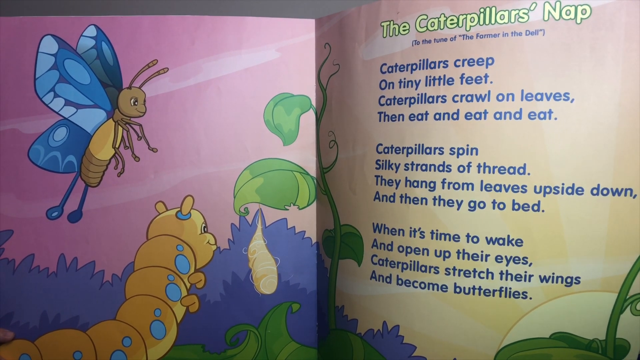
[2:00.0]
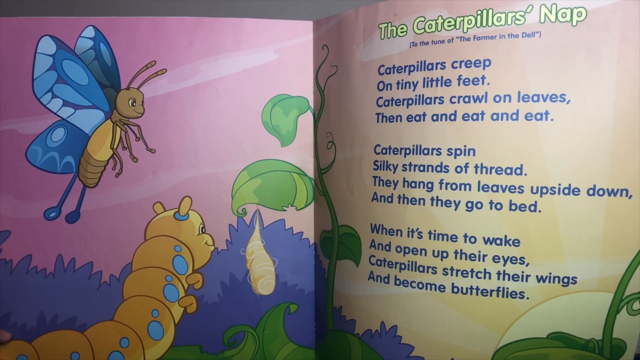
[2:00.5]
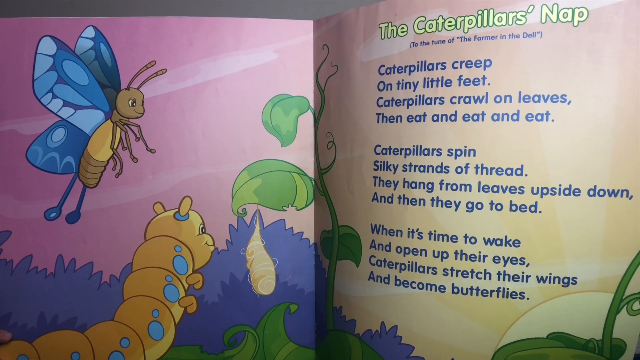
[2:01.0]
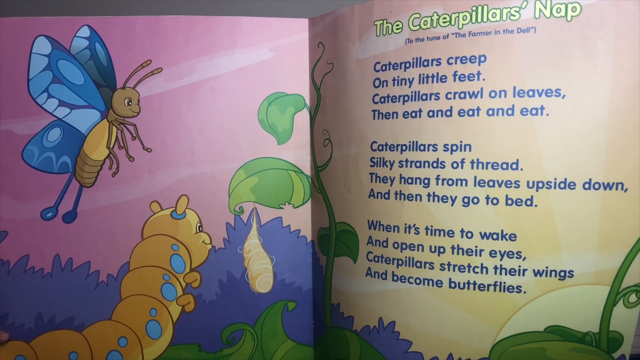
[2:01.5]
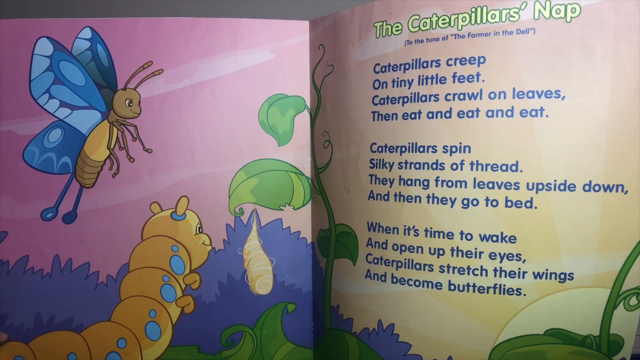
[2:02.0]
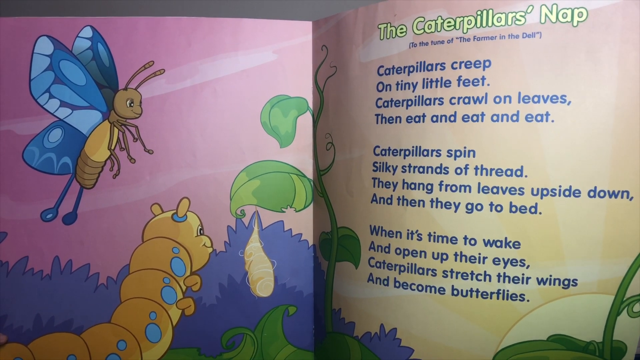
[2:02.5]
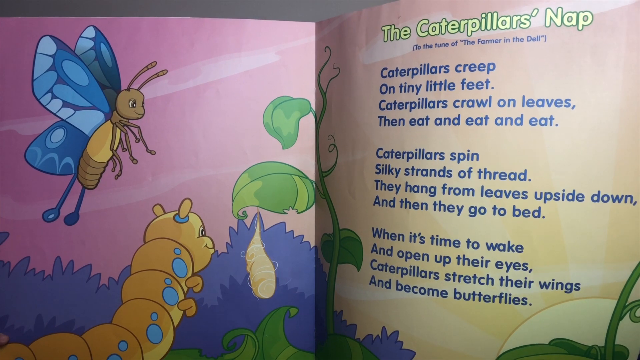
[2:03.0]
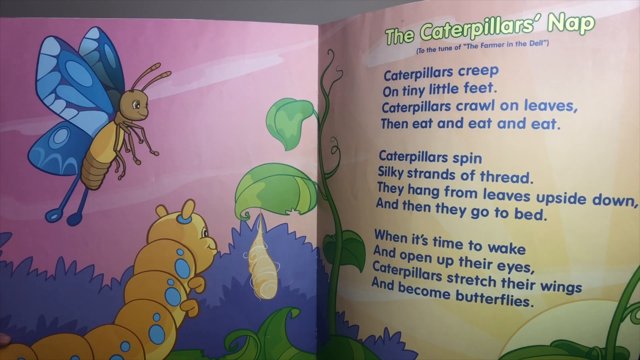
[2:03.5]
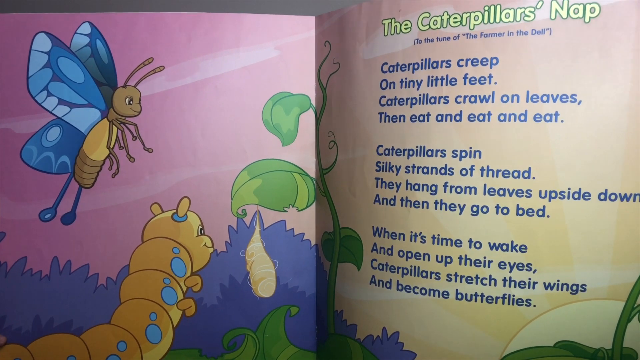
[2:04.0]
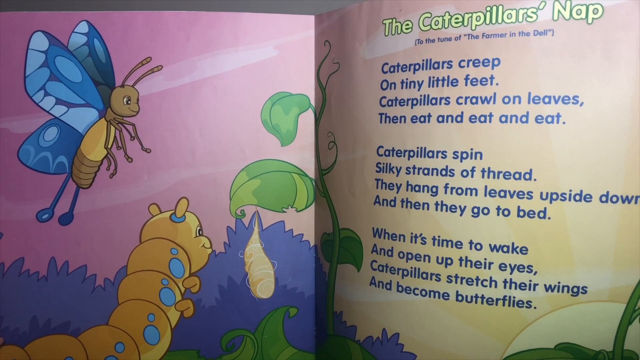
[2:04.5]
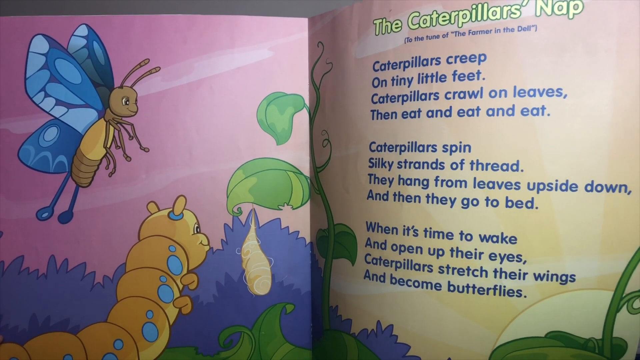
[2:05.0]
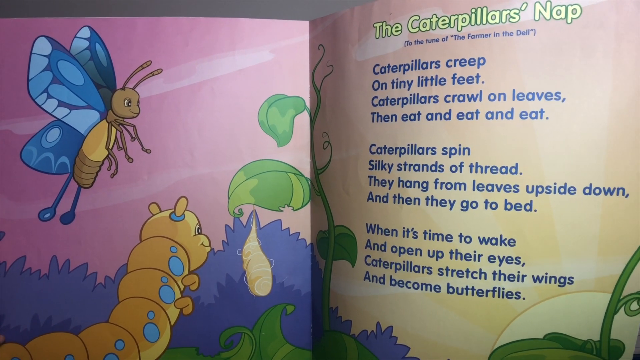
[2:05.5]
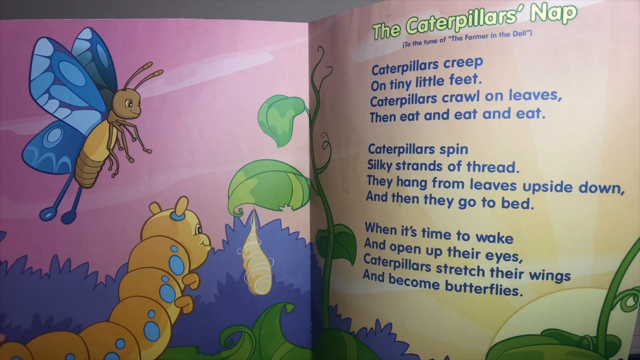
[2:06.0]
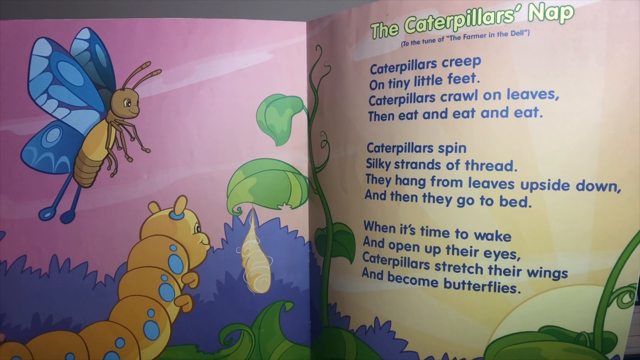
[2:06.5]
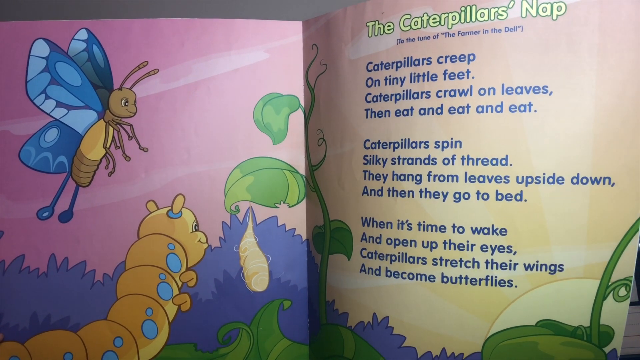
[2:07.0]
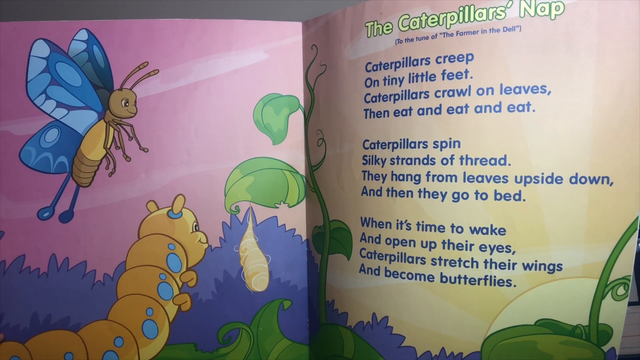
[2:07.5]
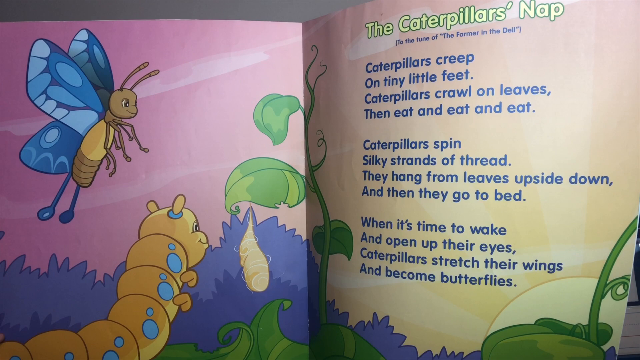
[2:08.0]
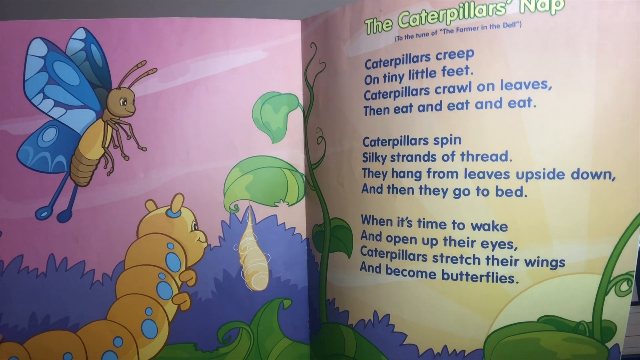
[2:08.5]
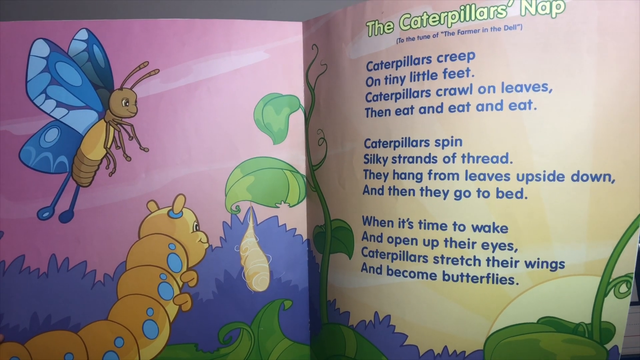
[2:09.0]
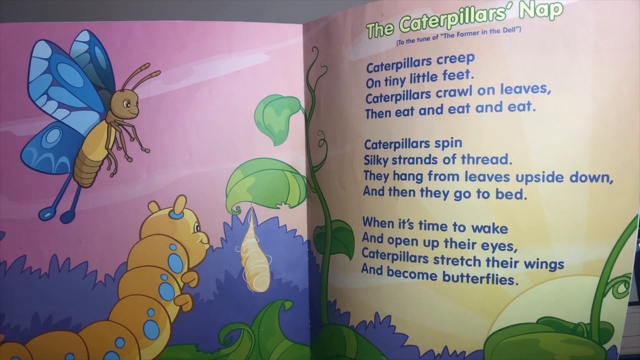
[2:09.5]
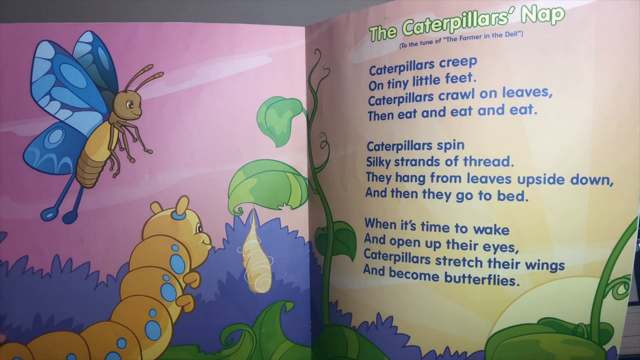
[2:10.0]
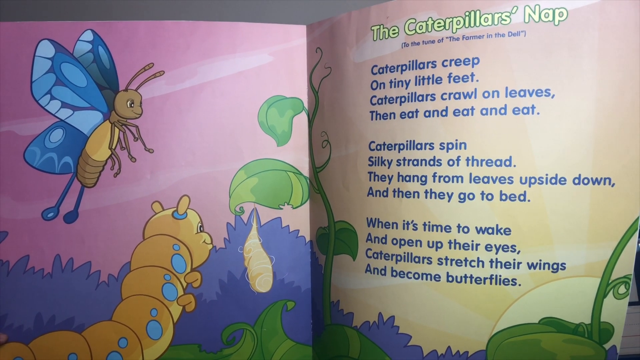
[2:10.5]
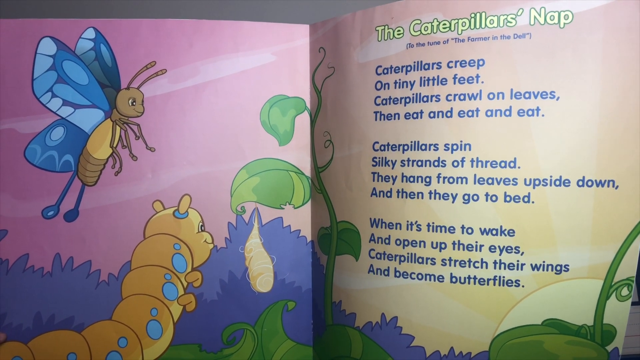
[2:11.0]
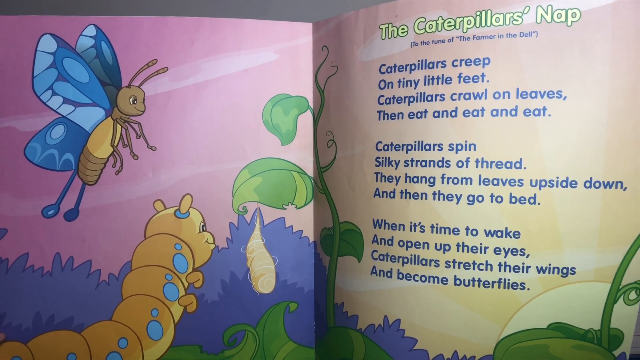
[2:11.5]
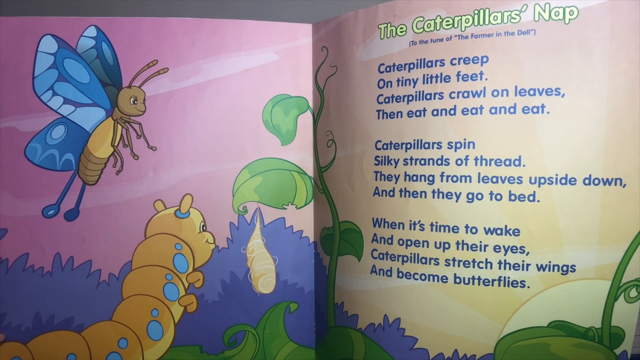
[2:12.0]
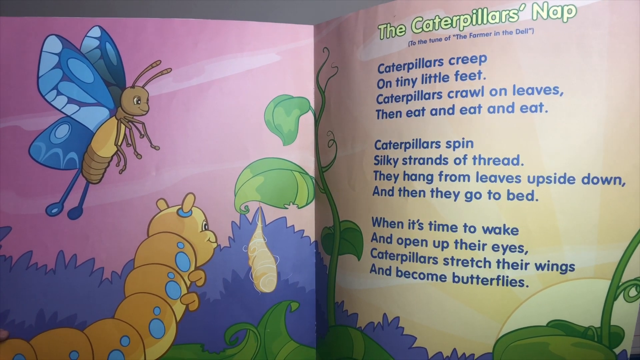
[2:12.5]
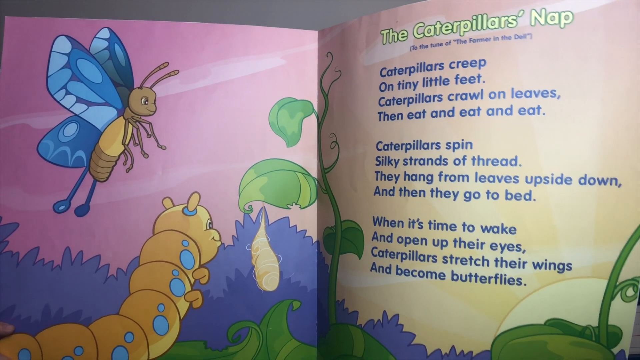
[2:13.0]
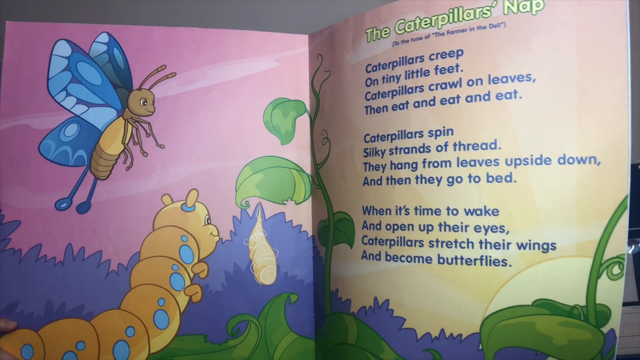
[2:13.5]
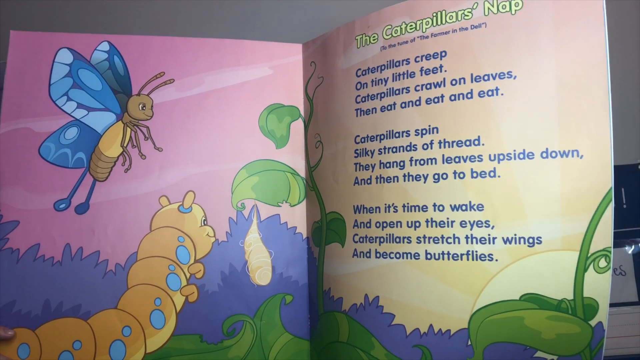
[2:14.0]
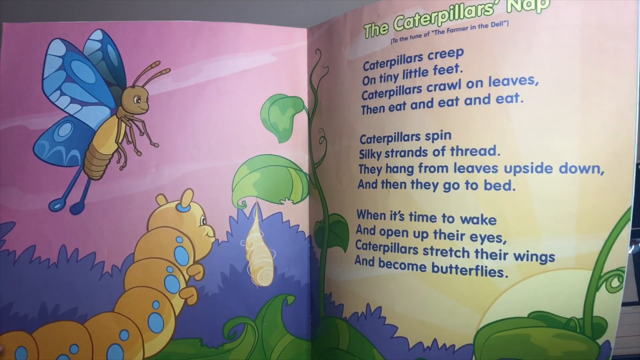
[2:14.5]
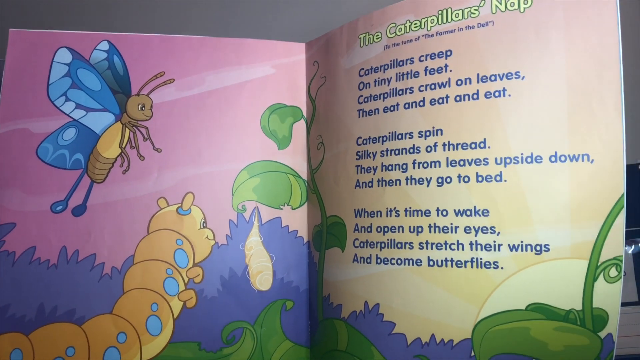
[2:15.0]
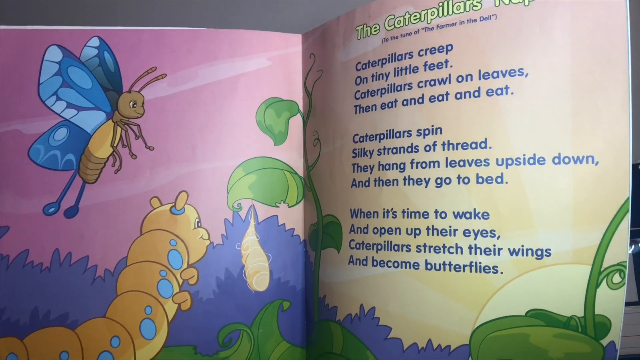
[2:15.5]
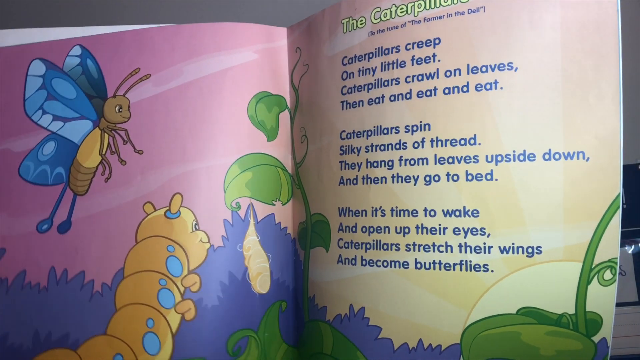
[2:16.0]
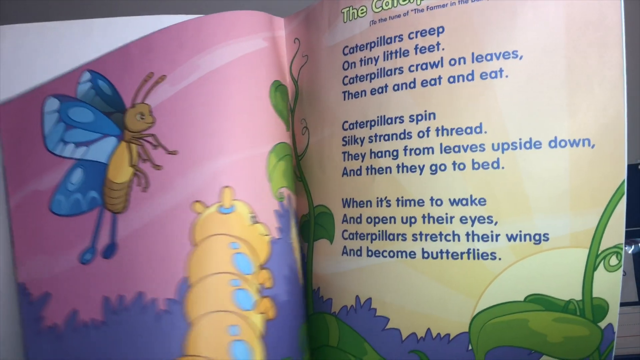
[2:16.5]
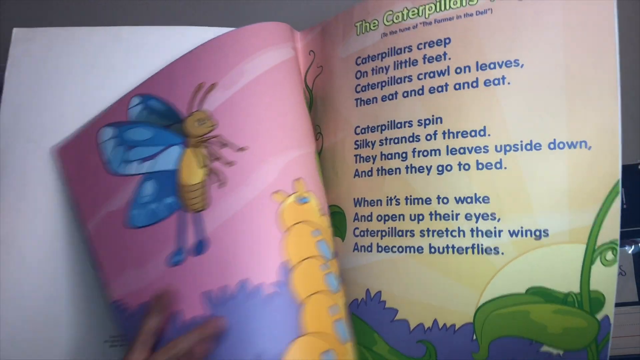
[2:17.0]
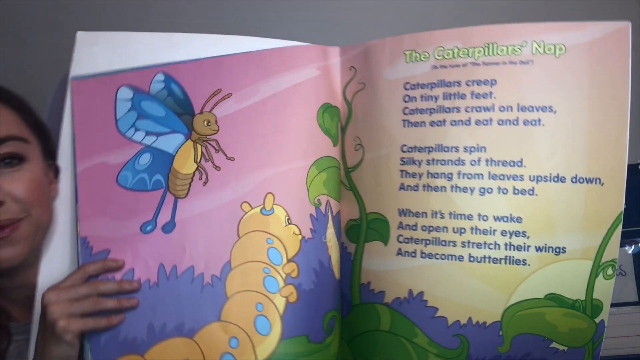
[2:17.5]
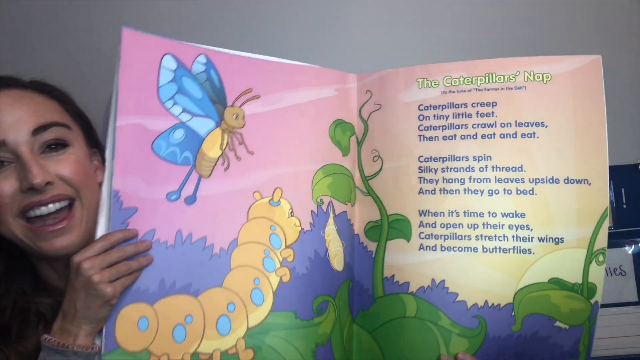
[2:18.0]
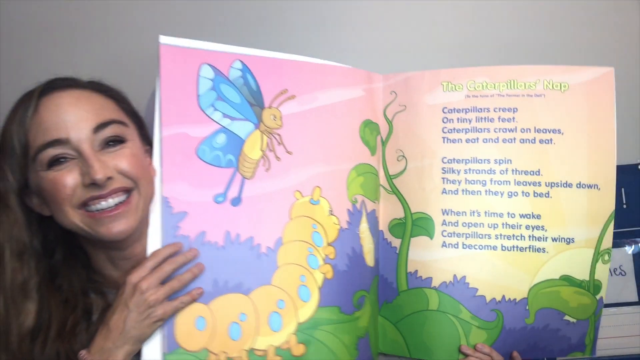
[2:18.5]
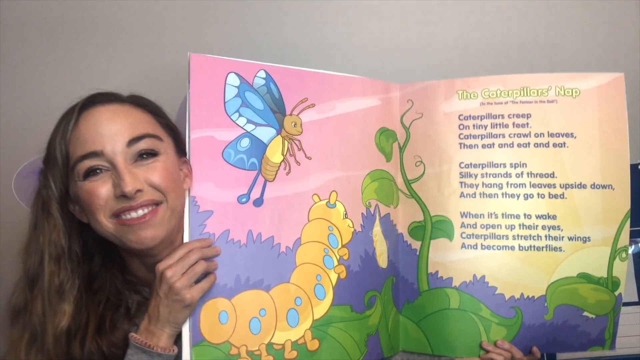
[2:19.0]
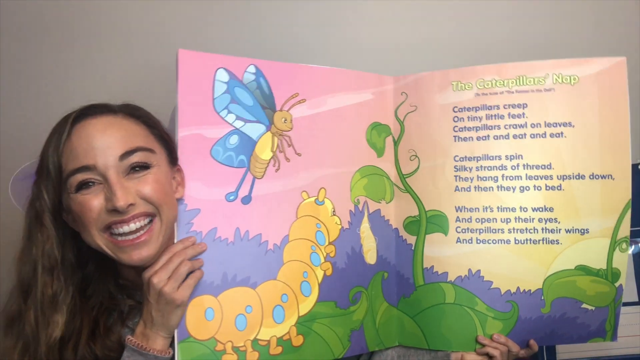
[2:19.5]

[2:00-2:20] The book shakes, and the page almost turns, but she catches it, and her smiling face is visible again before the view returns to the same page.